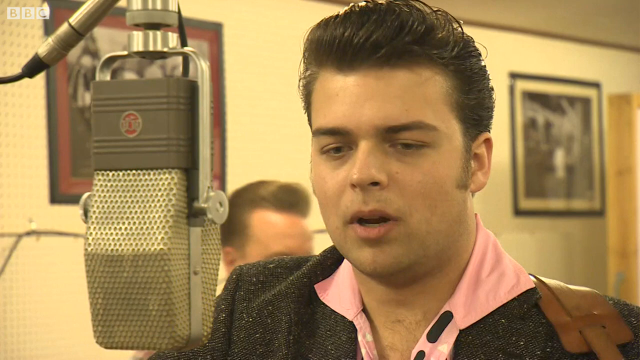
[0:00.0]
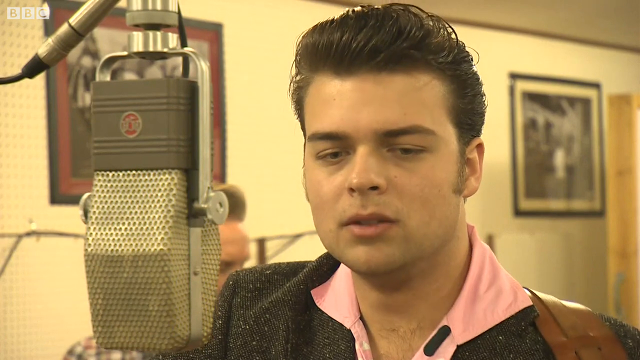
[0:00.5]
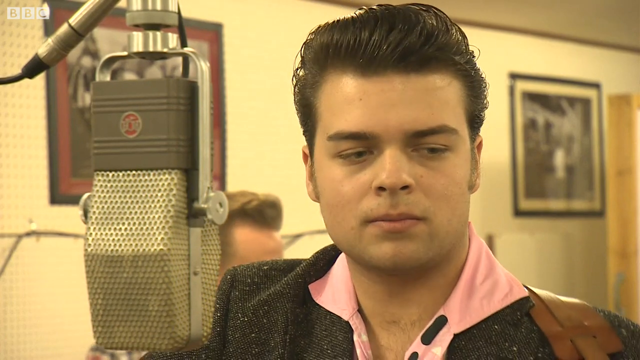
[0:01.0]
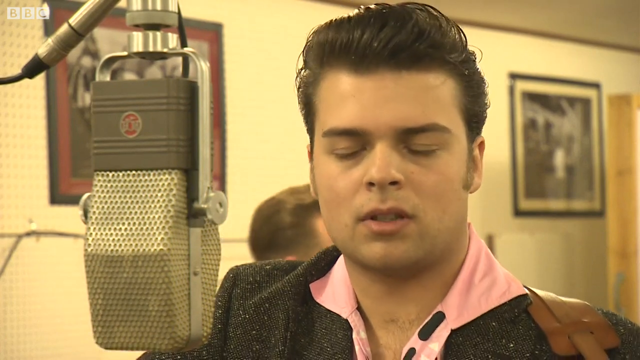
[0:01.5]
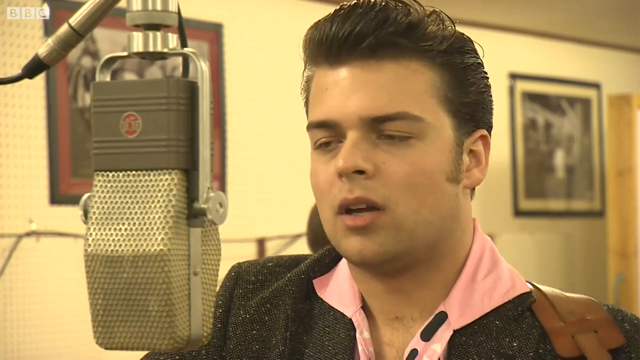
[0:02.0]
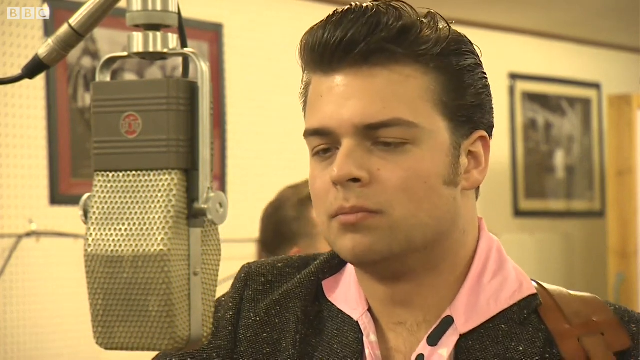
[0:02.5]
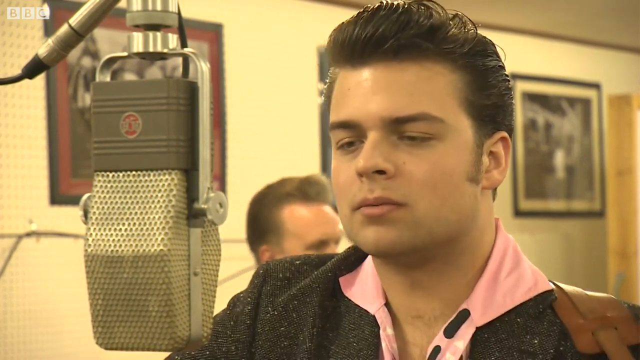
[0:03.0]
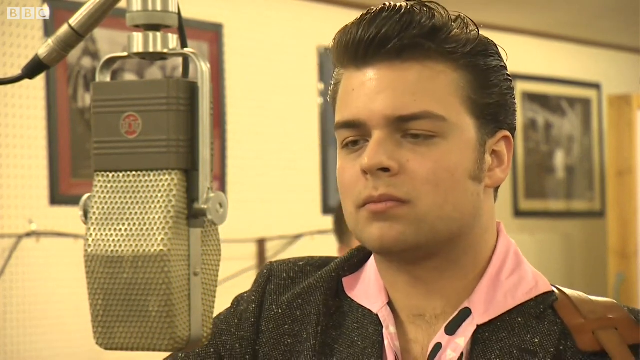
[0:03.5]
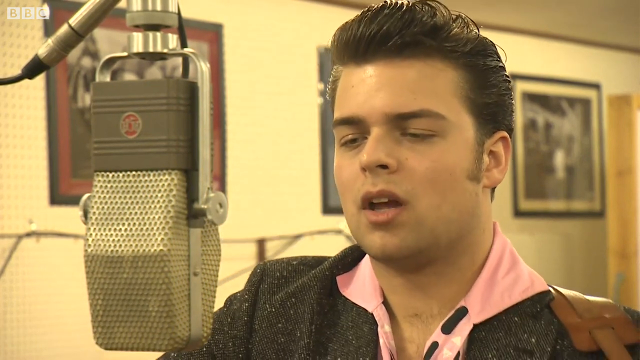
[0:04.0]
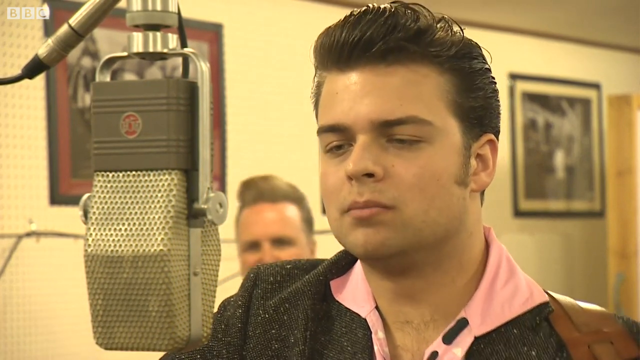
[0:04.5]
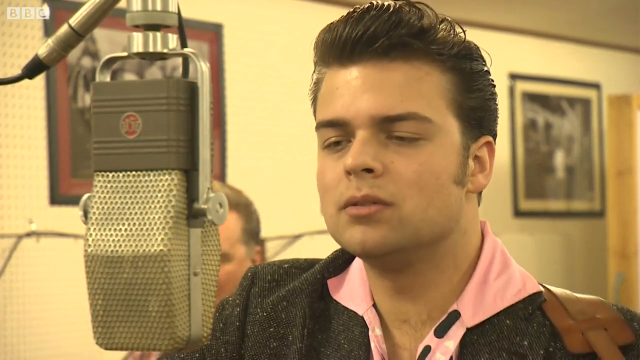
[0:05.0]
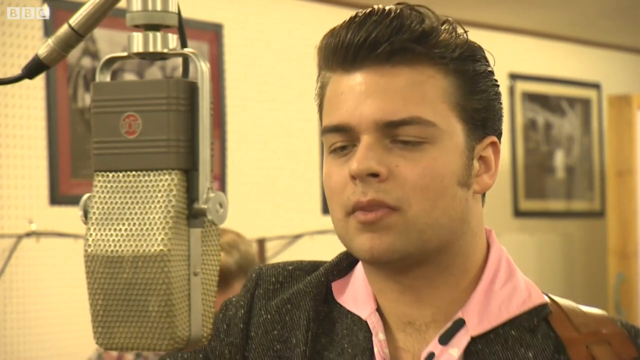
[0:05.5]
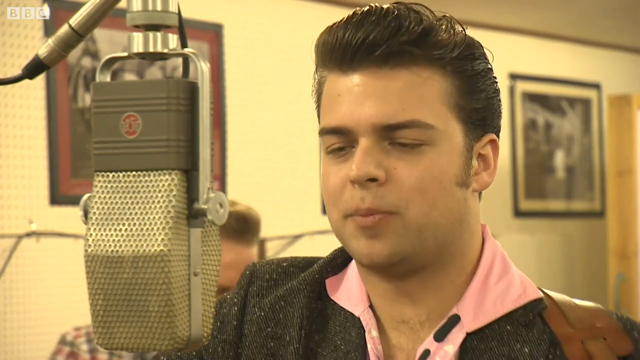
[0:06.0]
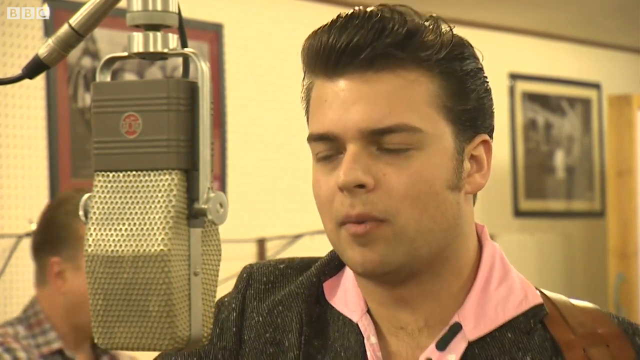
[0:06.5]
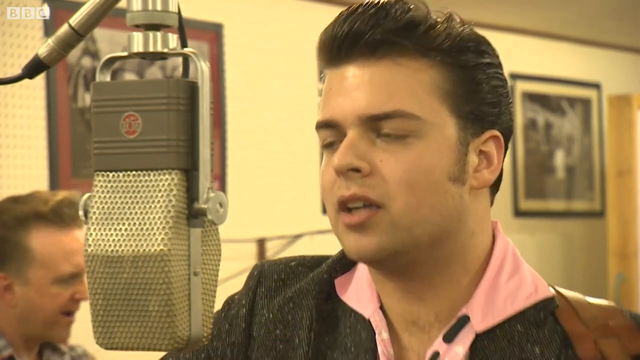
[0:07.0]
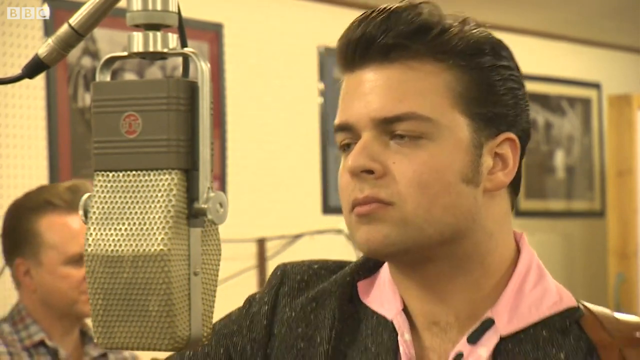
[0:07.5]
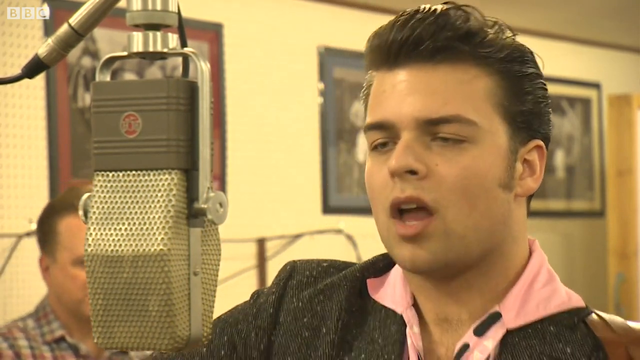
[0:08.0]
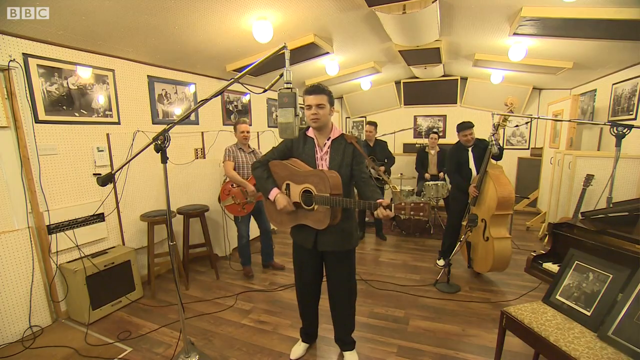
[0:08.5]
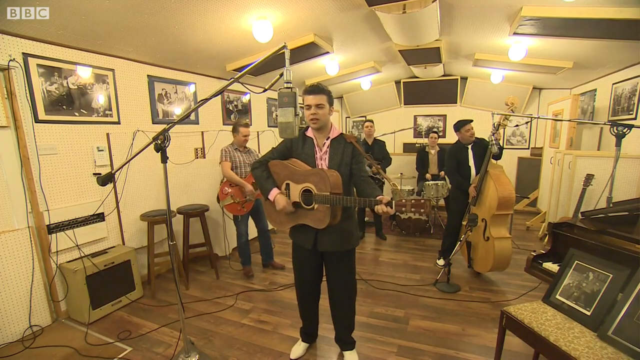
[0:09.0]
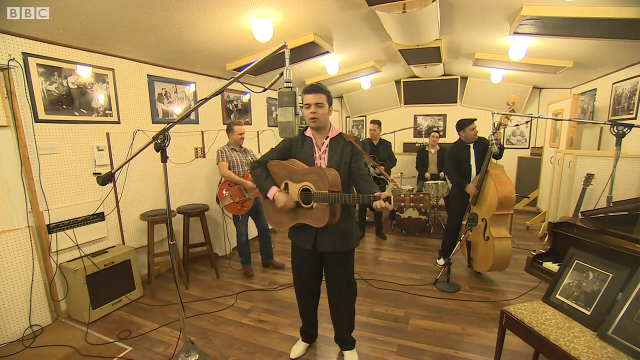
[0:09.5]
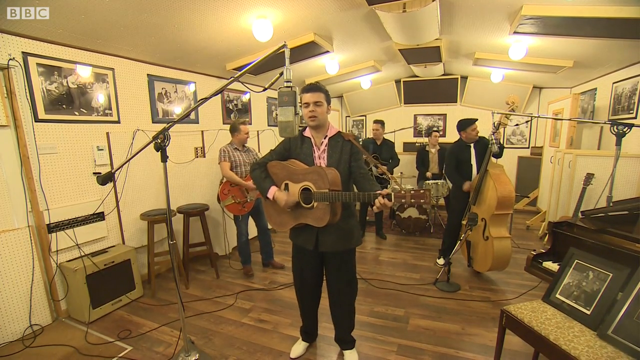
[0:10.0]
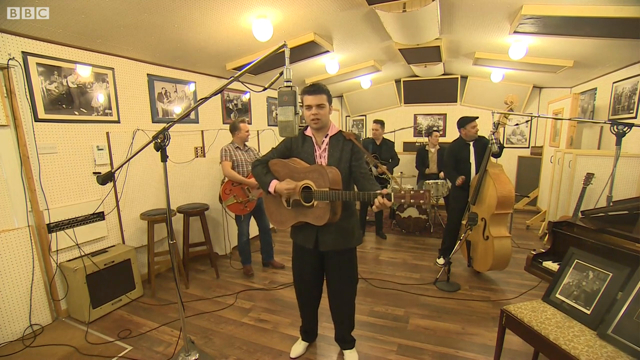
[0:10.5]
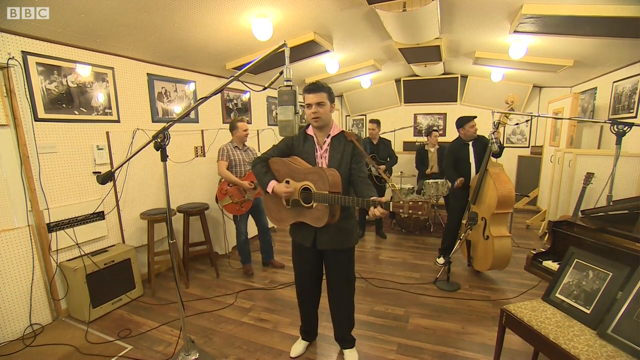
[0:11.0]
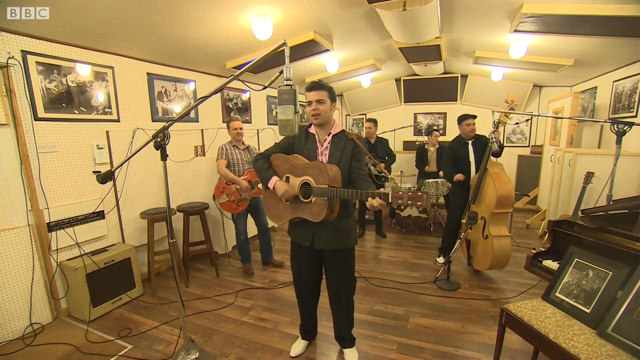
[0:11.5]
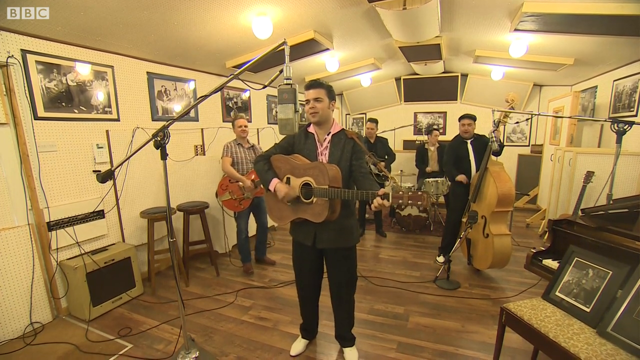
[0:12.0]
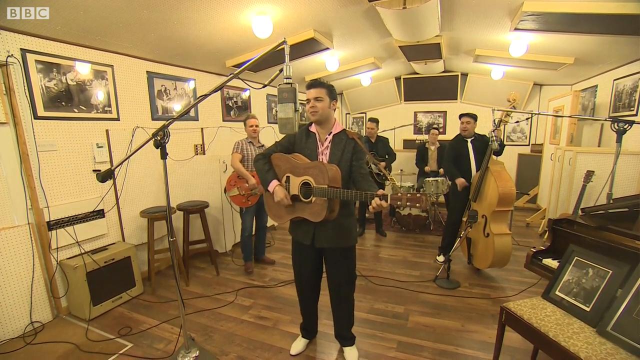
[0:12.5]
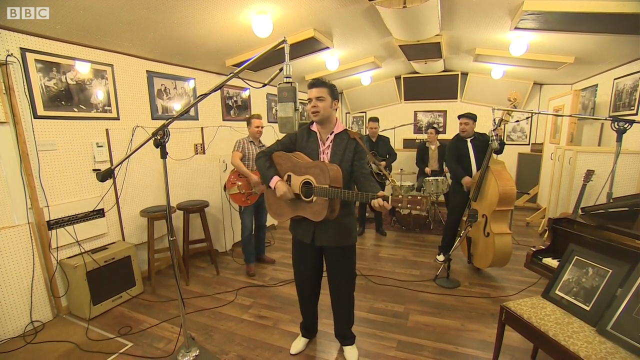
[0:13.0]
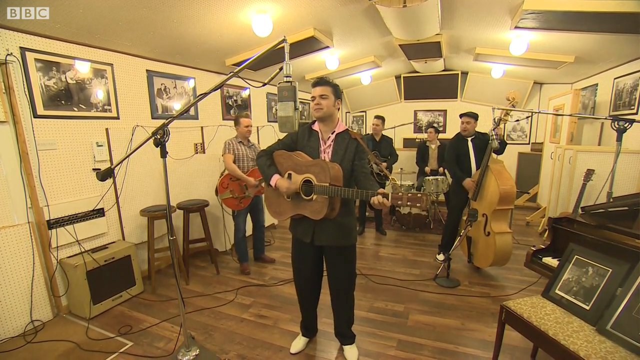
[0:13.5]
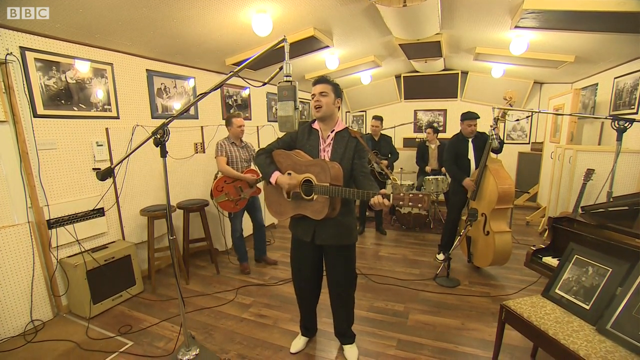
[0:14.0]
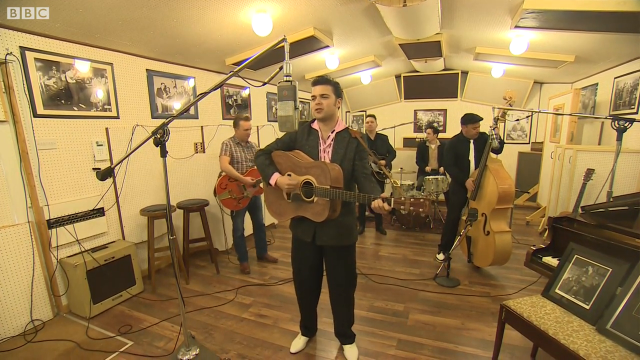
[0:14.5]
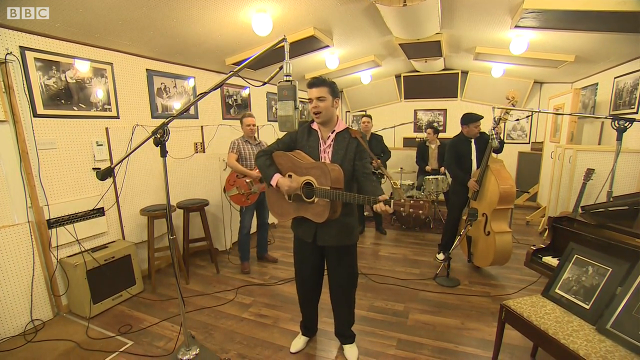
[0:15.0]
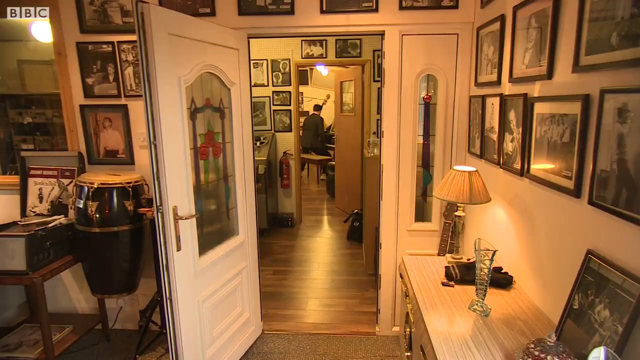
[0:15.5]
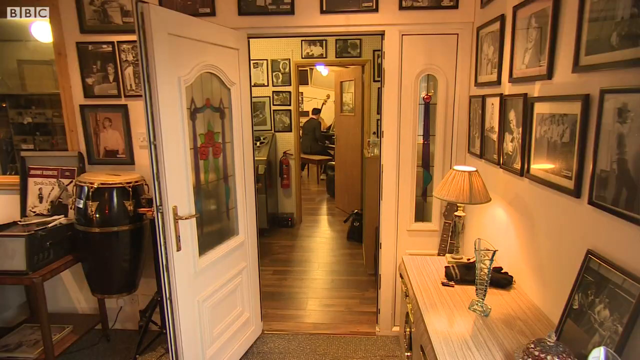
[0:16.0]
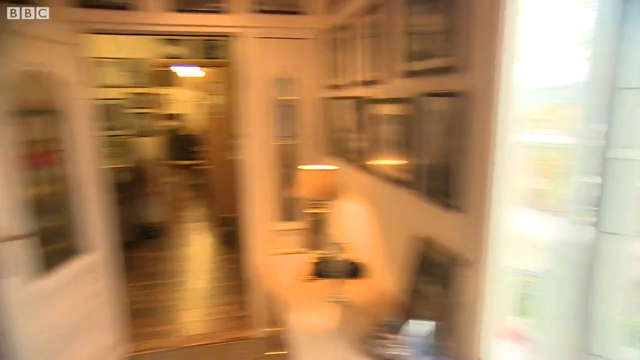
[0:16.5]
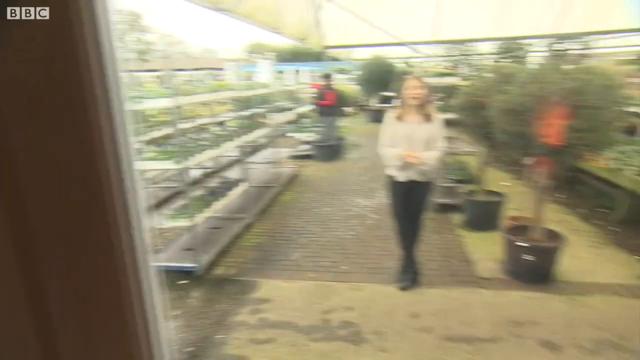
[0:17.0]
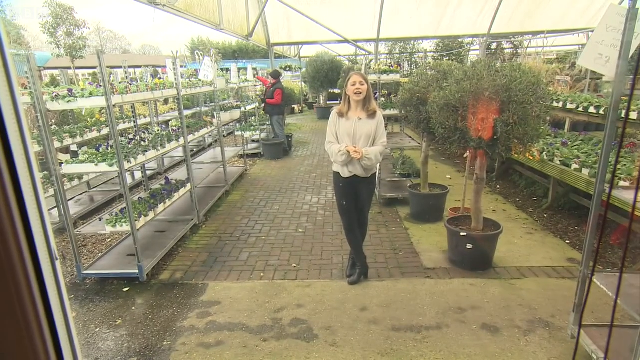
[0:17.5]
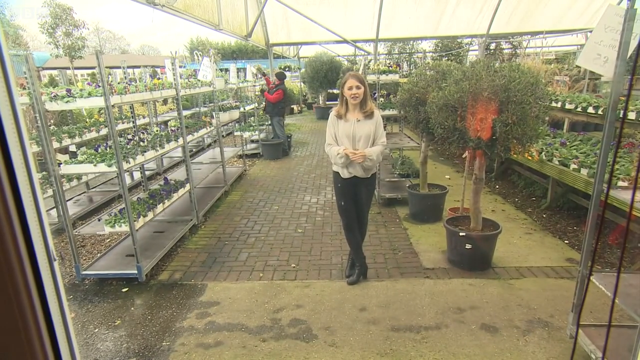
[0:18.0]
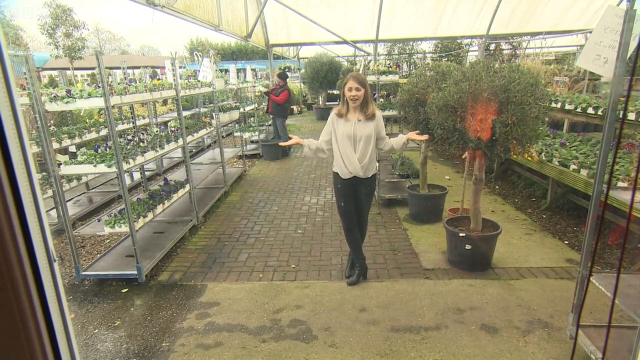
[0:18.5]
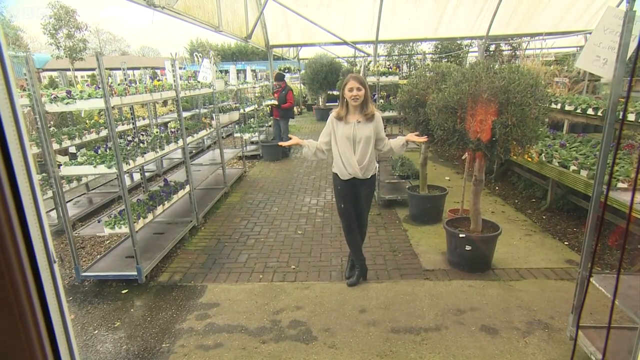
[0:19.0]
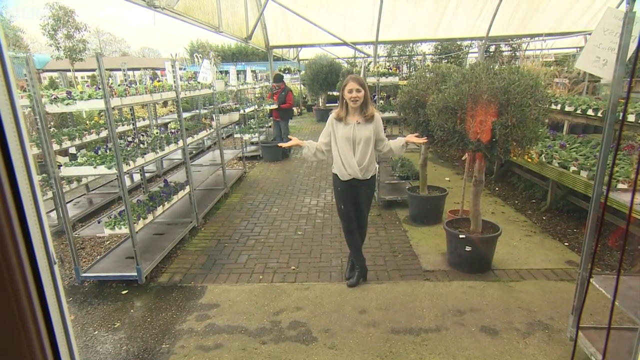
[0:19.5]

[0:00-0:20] A person in a studio sings into a microphone; the person is on the right, looking at the microphone, mouth moving as they sing. The shot widens to show the entire band in the studio. Each member plays an instrument, and the person in the very front plays a guitar, the hand moving up and down as it strums the strings. The video then transitions to a woman standing in a nursery of the kind used to grow plants, flowers and trees. The nursery is outdoors but covered by a large tent; the walls are not solid, so the outdoor area beyond the tent is visible.